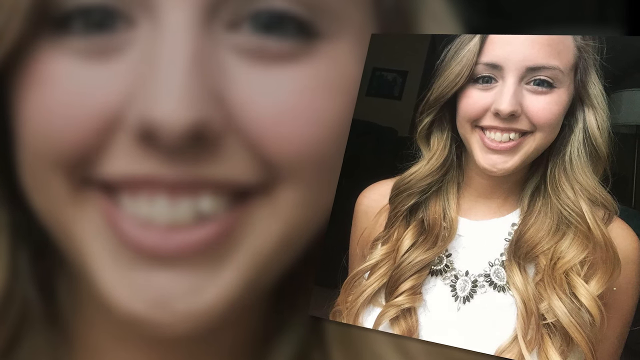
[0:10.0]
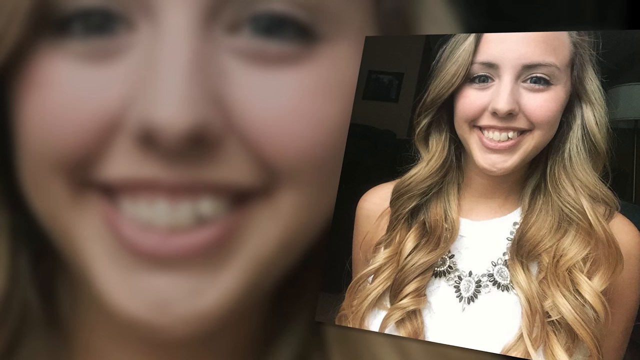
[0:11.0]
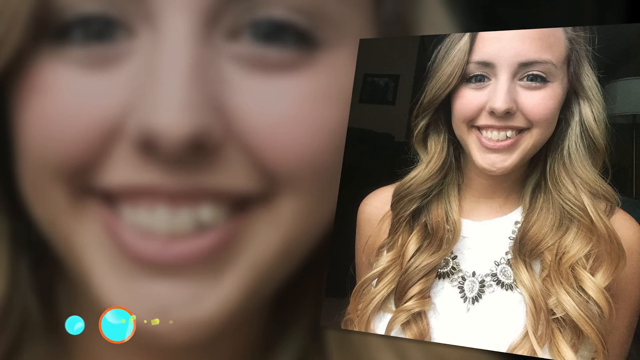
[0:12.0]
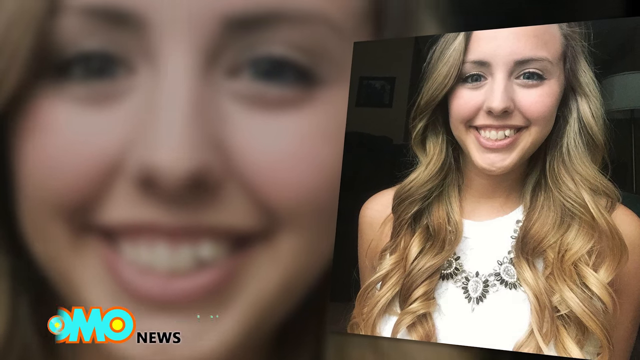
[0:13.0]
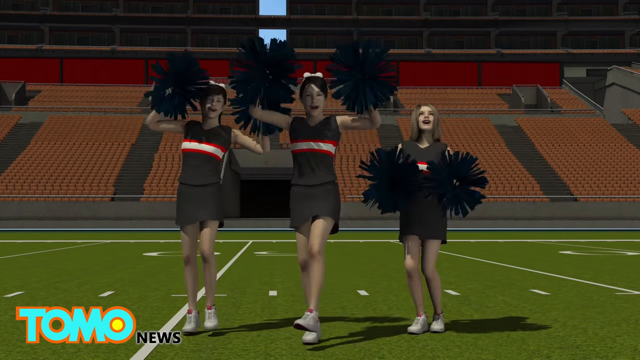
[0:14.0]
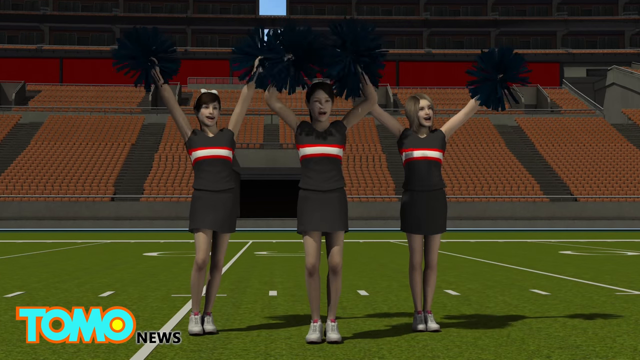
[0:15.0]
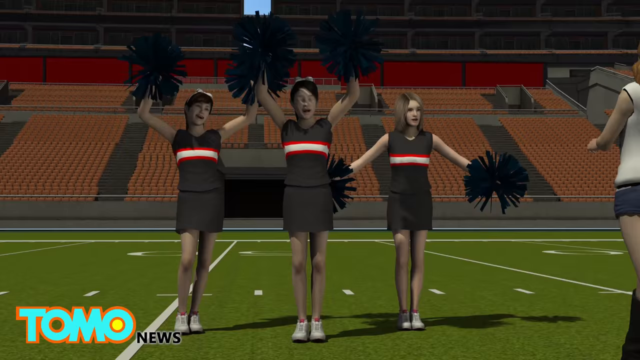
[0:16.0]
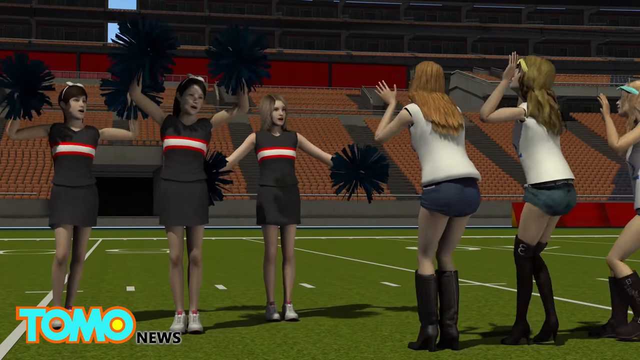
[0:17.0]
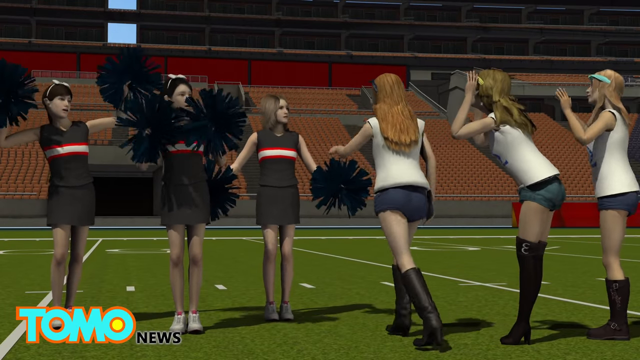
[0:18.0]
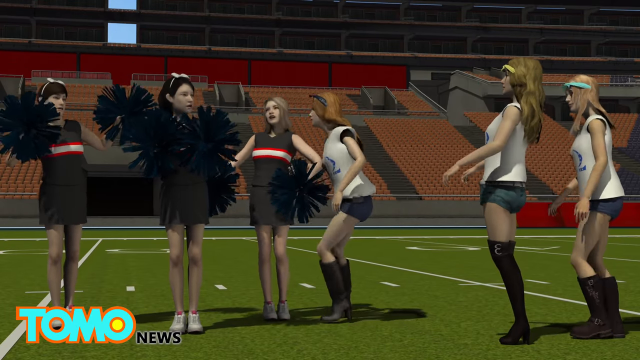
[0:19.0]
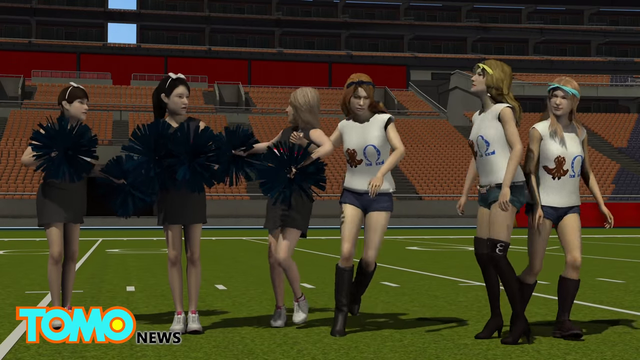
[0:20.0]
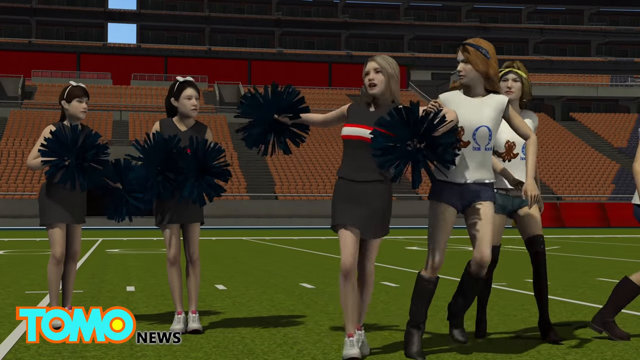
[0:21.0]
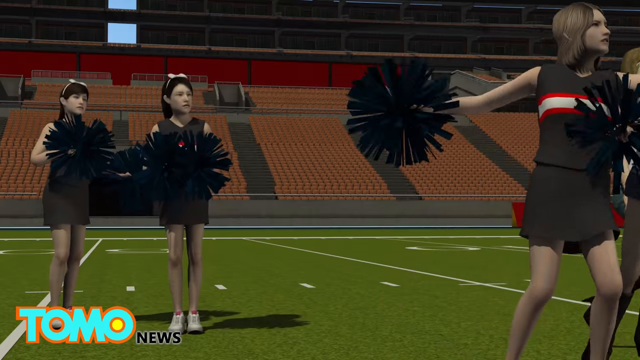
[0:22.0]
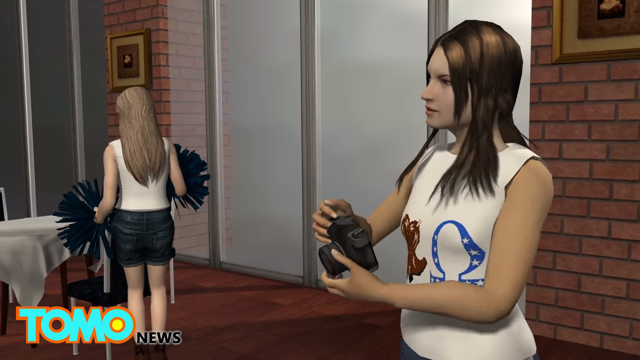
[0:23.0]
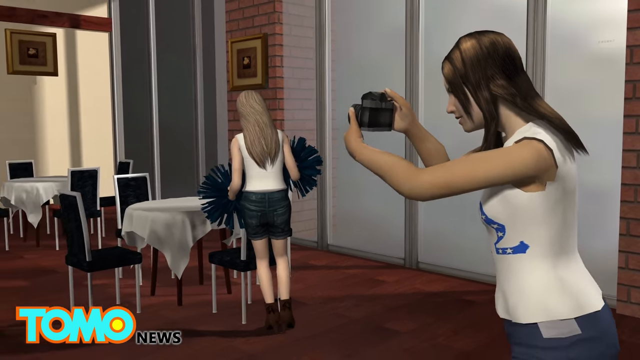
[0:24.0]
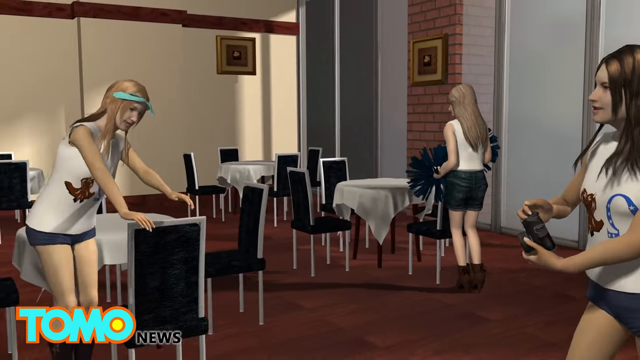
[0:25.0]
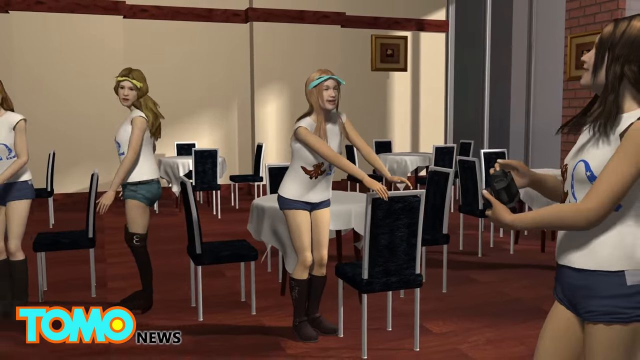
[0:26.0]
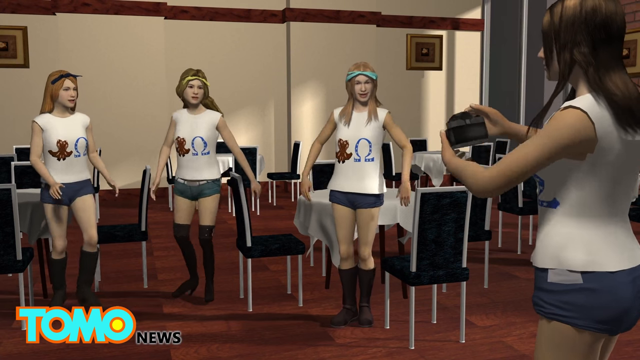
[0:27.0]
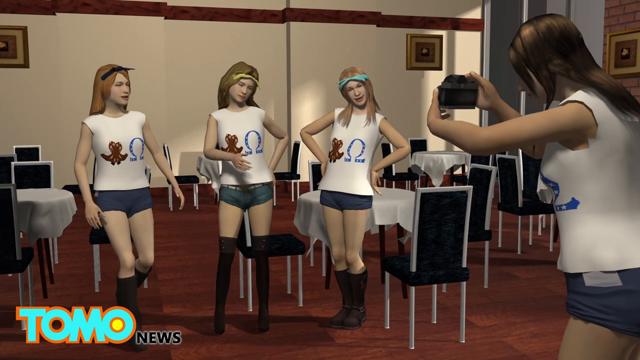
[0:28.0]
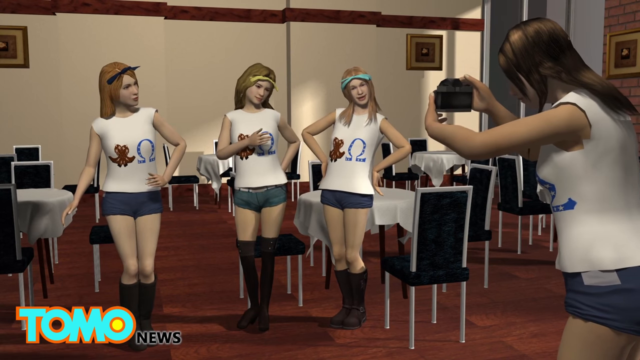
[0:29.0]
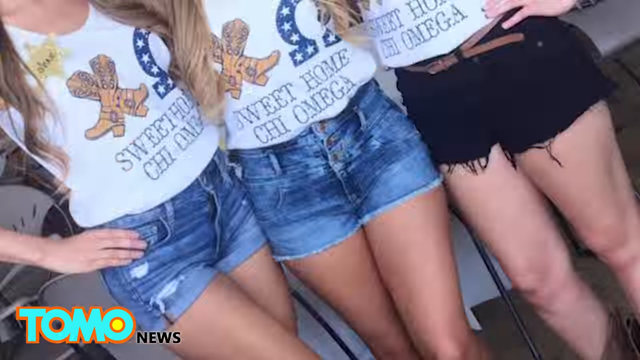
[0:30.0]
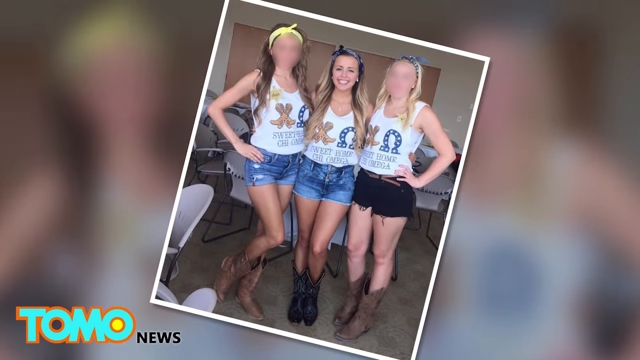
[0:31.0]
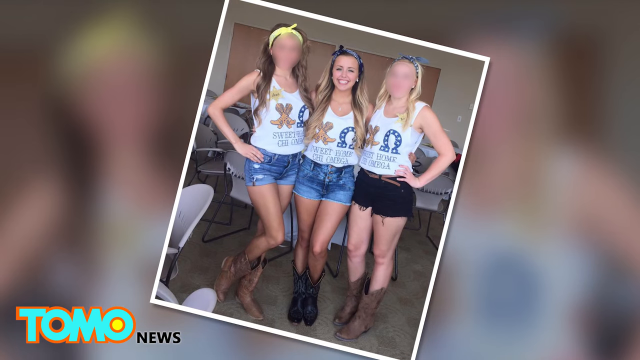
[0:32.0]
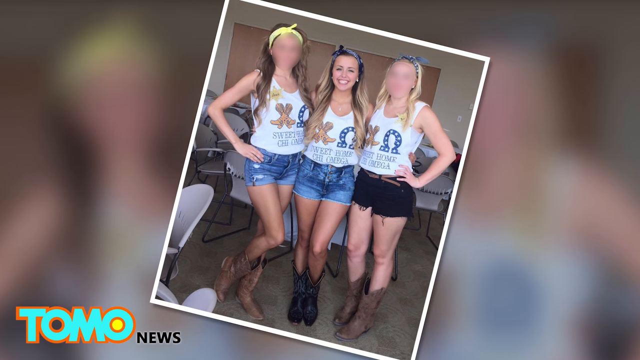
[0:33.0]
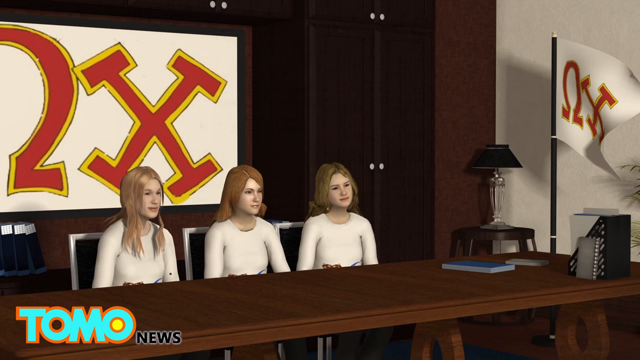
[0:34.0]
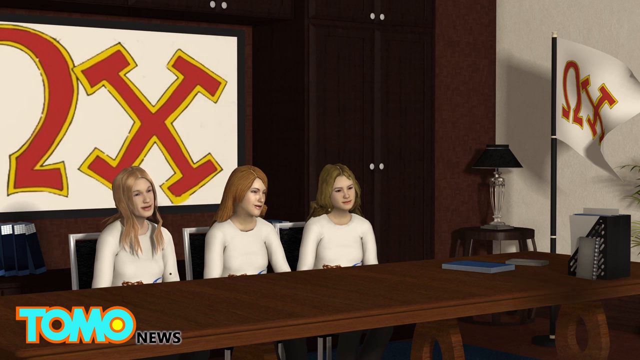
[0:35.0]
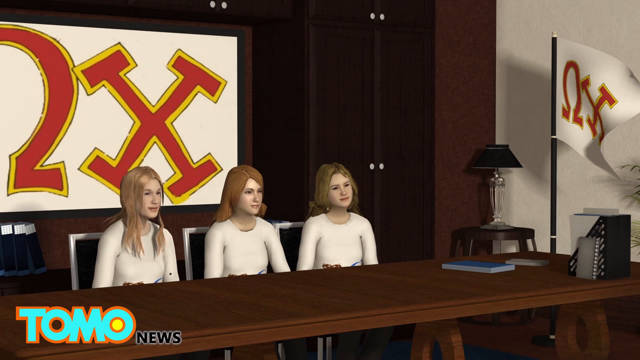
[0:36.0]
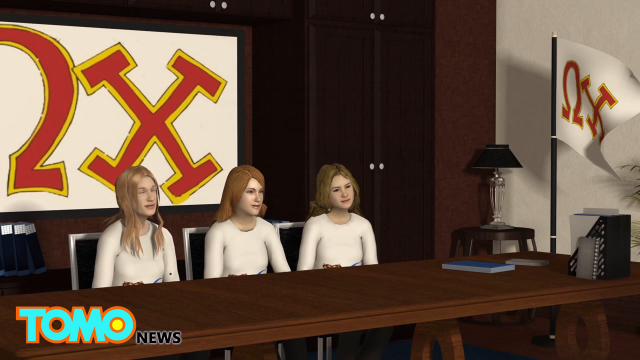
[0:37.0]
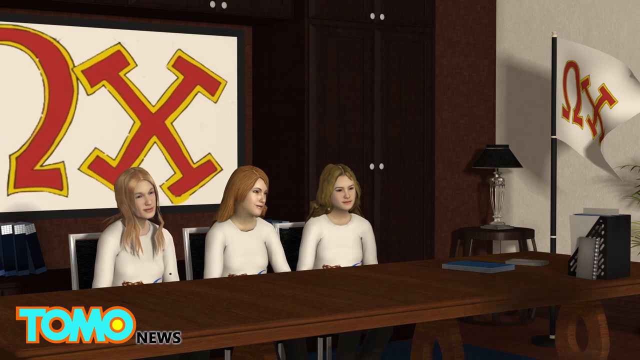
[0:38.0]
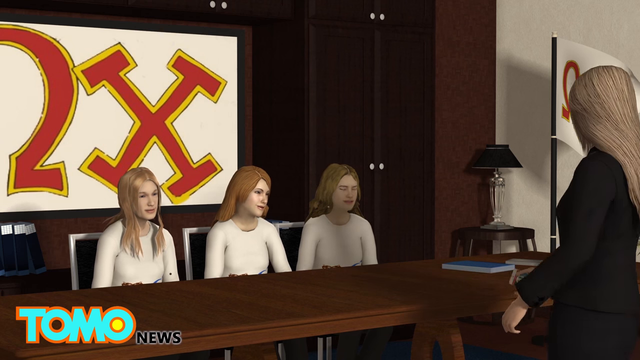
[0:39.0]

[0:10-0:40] A couple of photos show a young blonde woman who is smiling and looks happy and very youthful. The video lingers on her for a little while before switching to a different graphic: a computer-generated image of three cheerleaders cheering with pom-poms. Three other ladies enter the screen, basically making fun of the cheerleaders, and they kind of drag one cheerleader away. Another computer graphic shows photos being made of some girls. Then comes a real-world shot of three real people wearing very short cut-off denim shorts, cowboy boots, and white tank tops with logos that read "Sweet Home Chi Omega," apparently a sorority. The girls have long hair tied up with little cloth items. The computer-generated imagery returns, now showing three girls seated at a table, all computer-simulated.